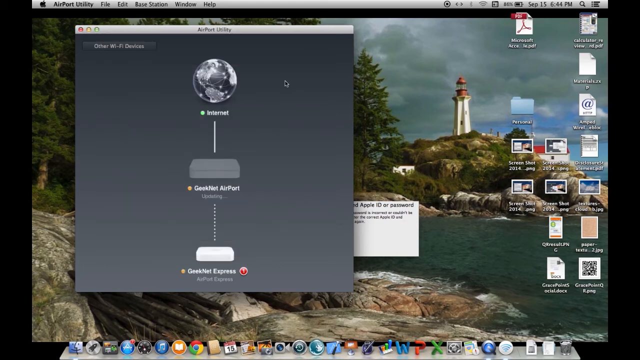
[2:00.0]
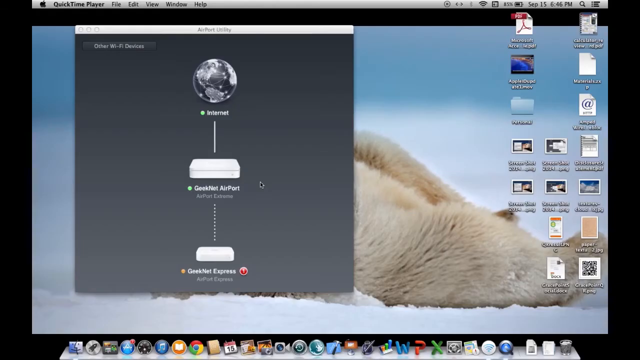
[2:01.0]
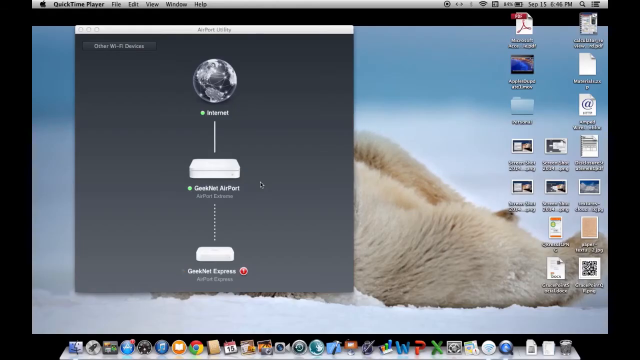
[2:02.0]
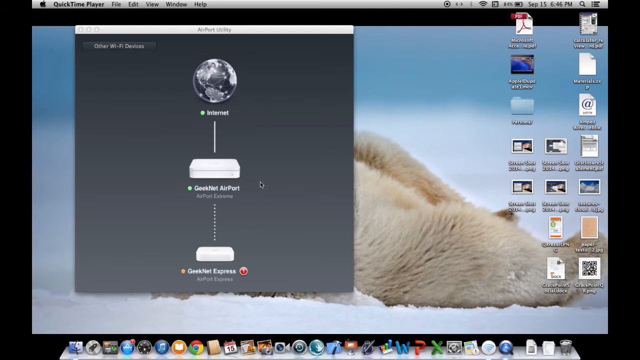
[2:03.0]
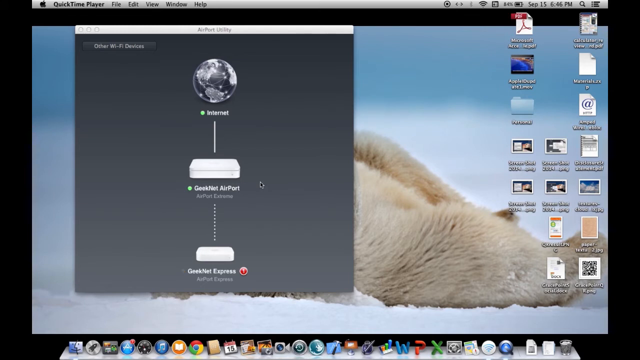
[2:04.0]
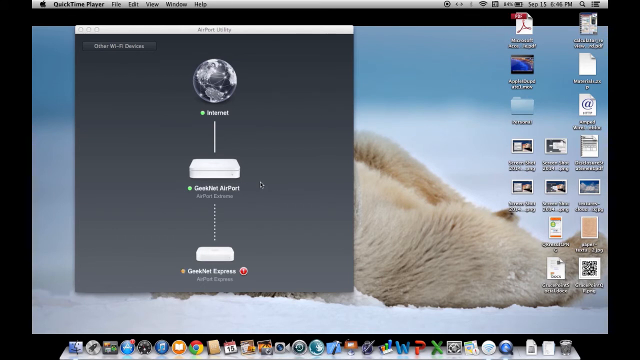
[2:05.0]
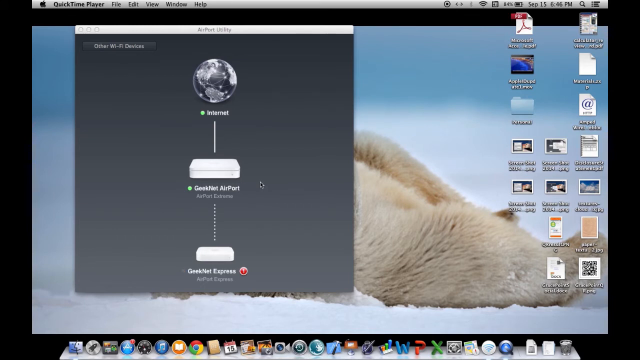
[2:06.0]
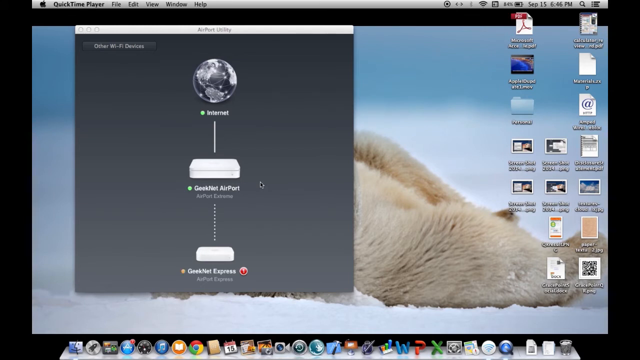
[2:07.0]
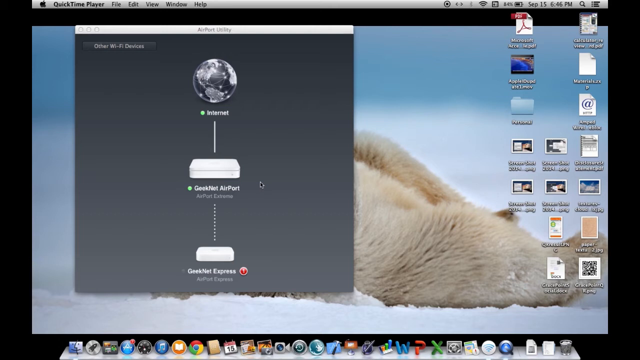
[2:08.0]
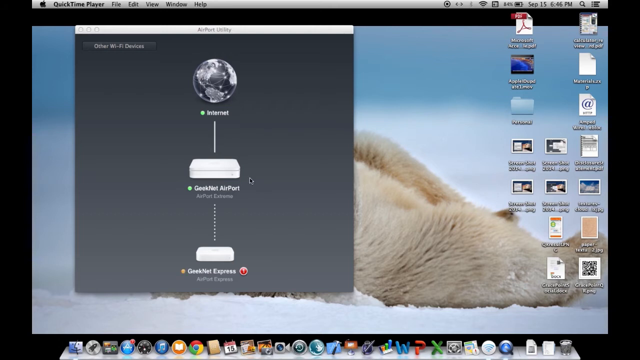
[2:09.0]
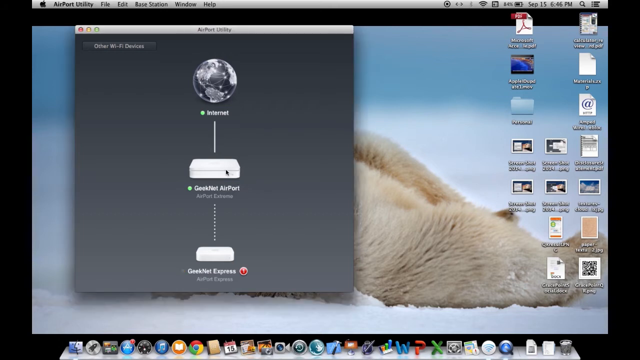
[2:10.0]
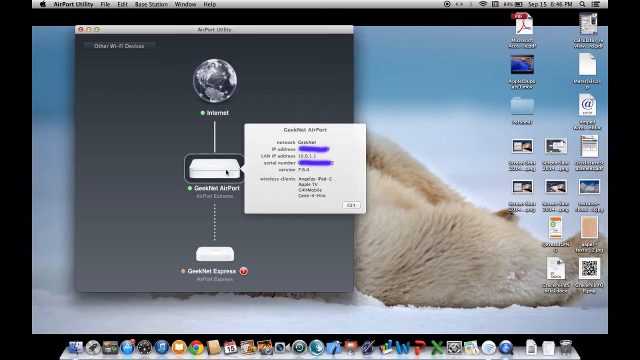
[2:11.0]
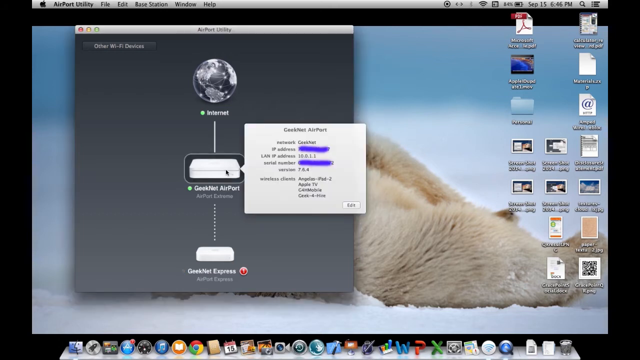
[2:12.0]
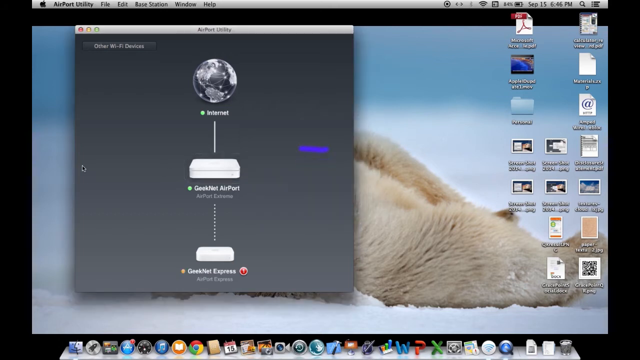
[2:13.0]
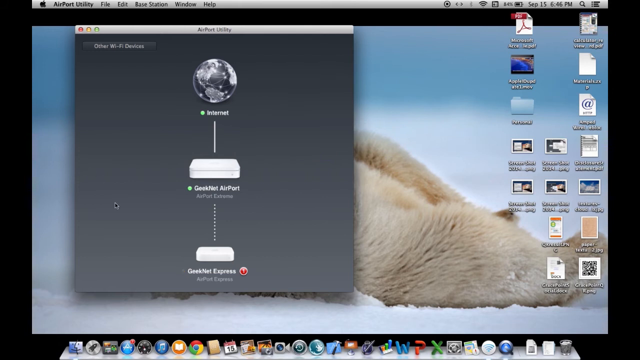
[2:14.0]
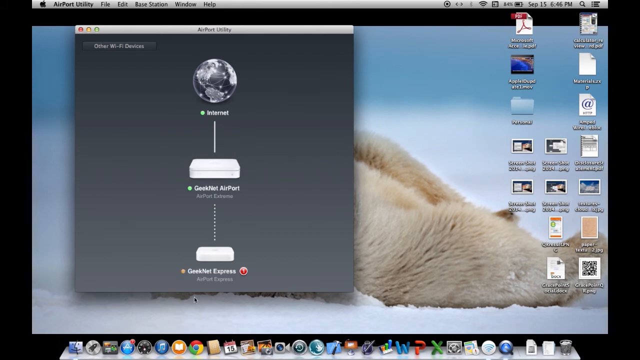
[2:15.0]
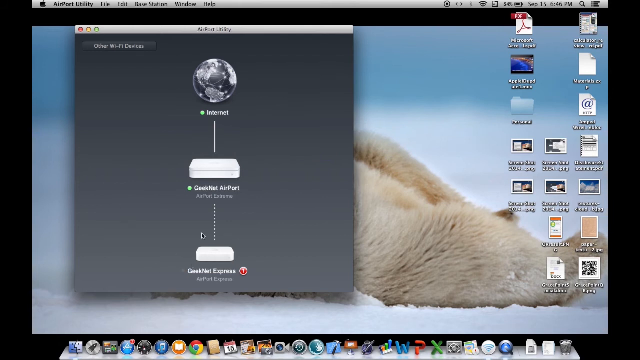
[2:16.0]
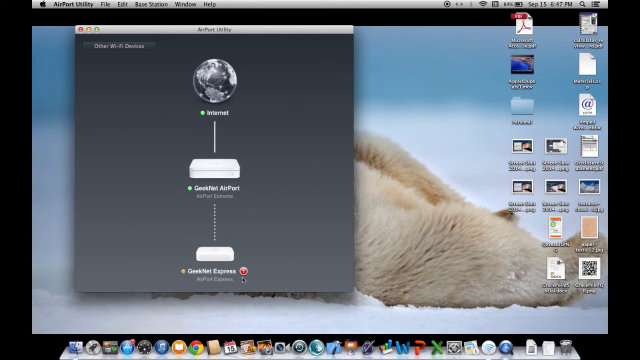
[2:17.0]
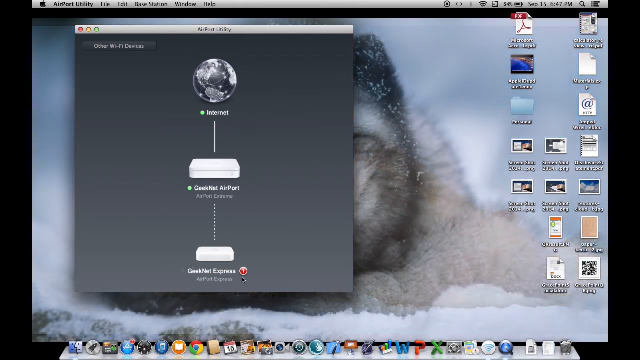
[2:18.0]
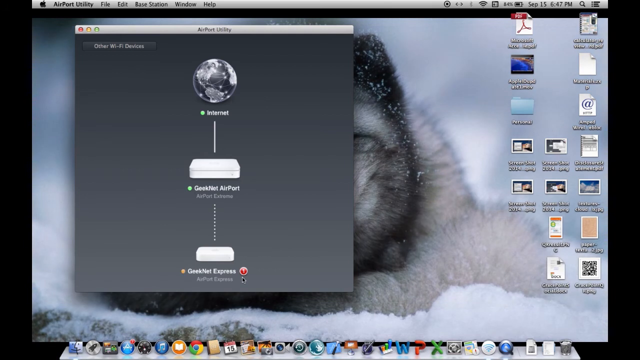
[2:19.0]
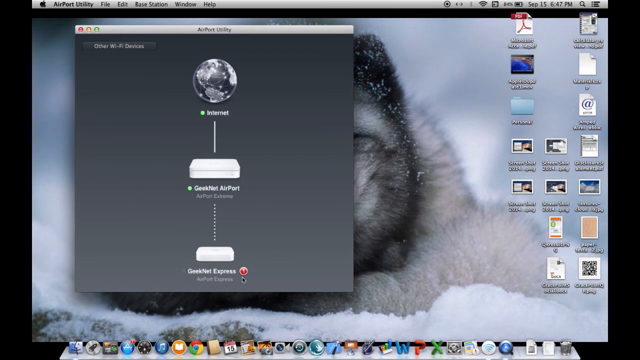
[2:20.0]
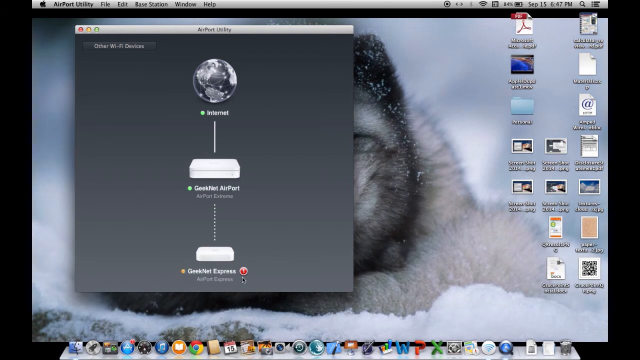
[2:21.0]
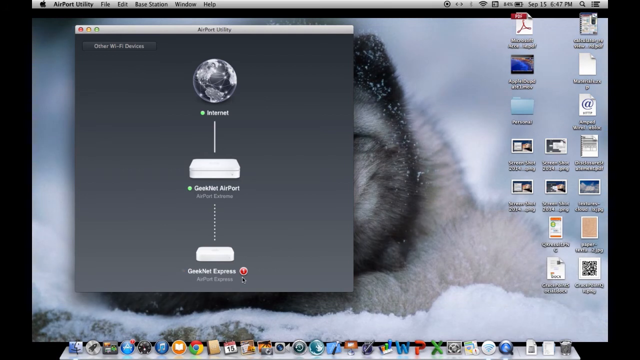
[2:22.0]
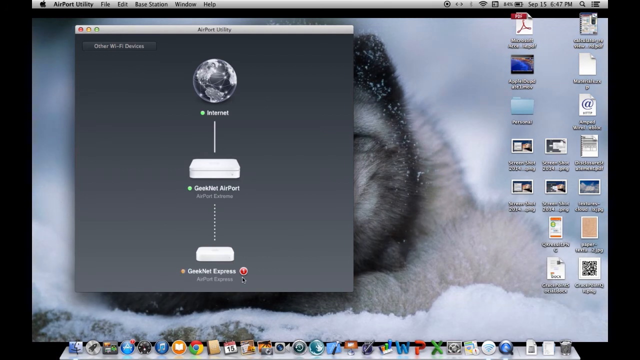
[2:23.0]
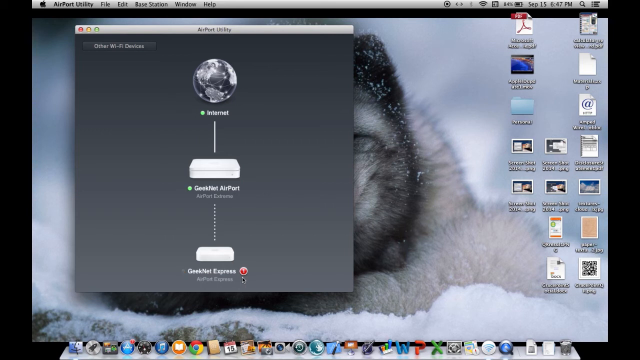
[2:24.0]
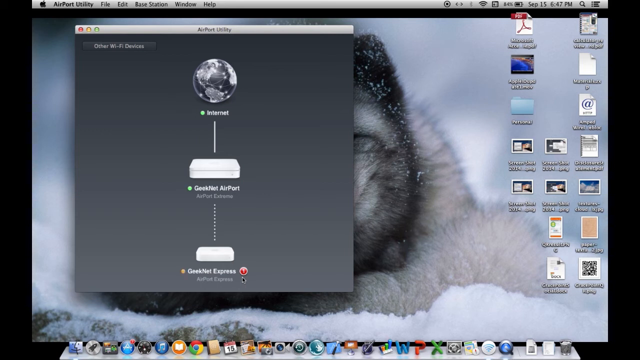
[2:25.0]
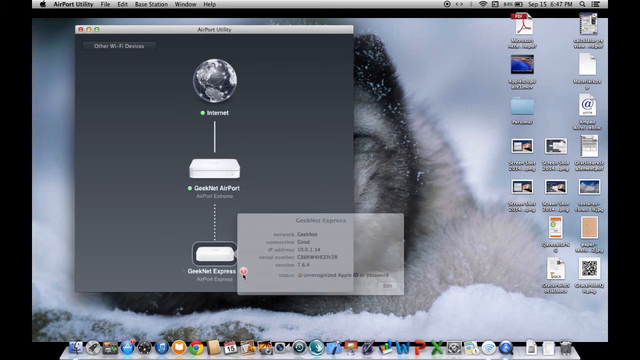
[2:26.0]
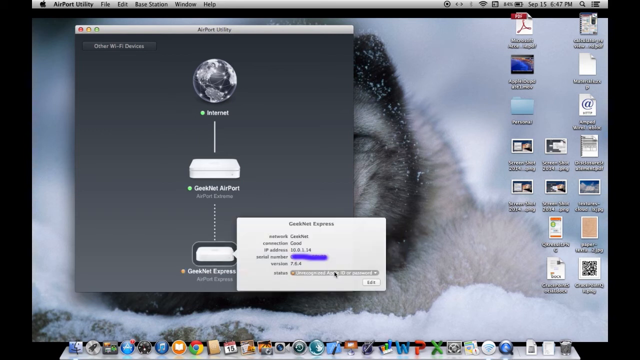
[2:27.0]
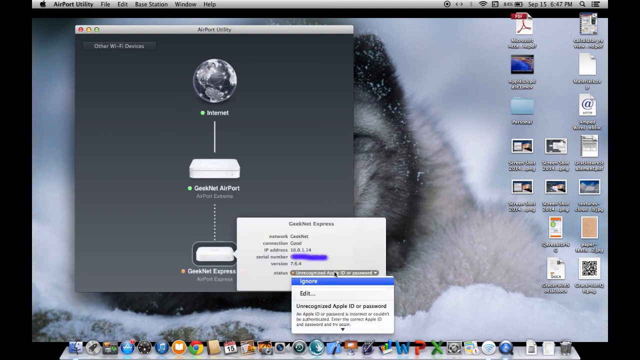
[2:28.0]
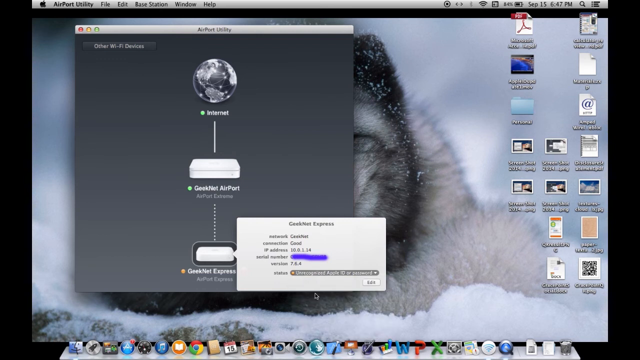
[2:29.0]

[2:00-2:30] GreekNet Airport is shown, with GreekNet Express at the bottom of the screen marked by a little yellow indicator that blinks yellow. The internet shows green and GreekNet Airport shows green. The bottom portion has a little red circle with an exclamation point or a question mark in it, flashing yellow, indicating something is wrong. When it is clicked and edit is selected, it still says "unrecognizable Apple password." The sign-in attempts are still not working.